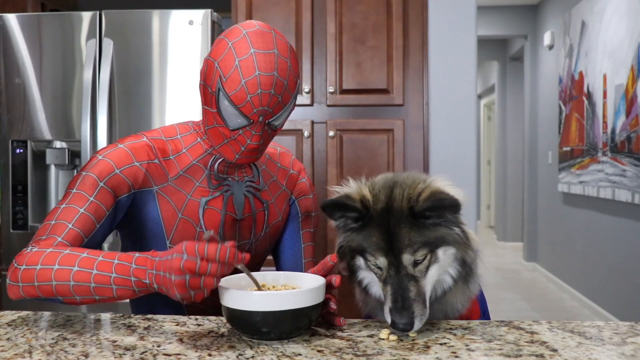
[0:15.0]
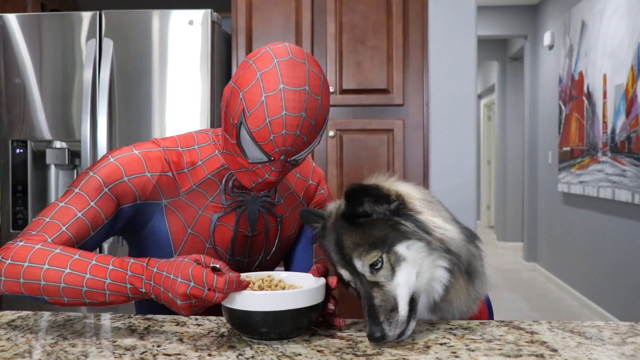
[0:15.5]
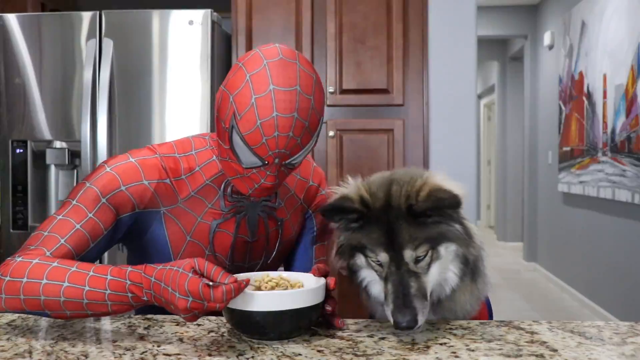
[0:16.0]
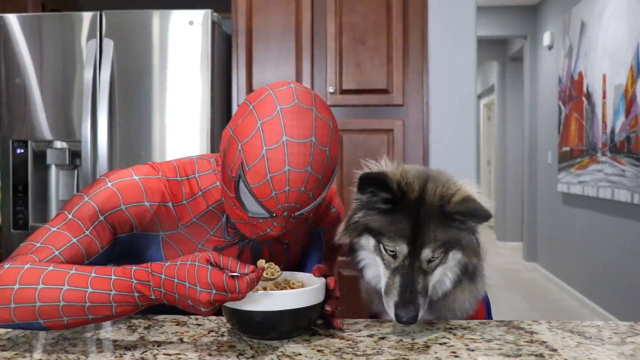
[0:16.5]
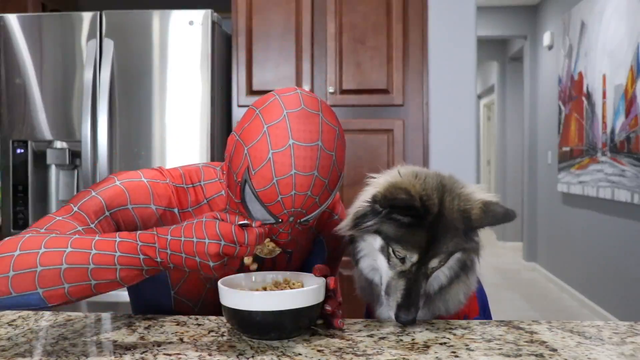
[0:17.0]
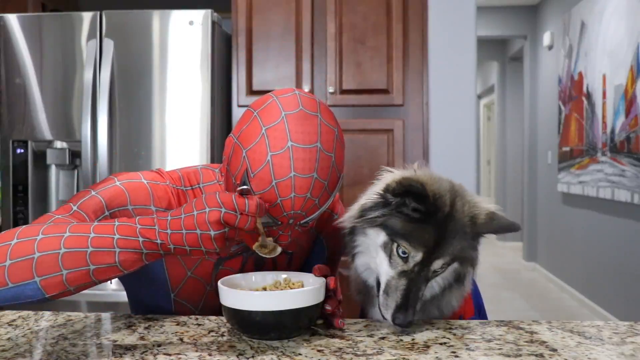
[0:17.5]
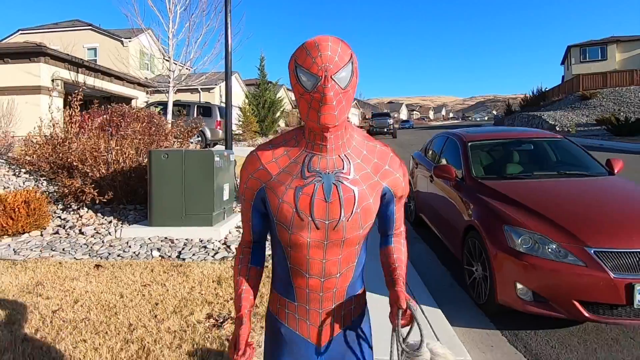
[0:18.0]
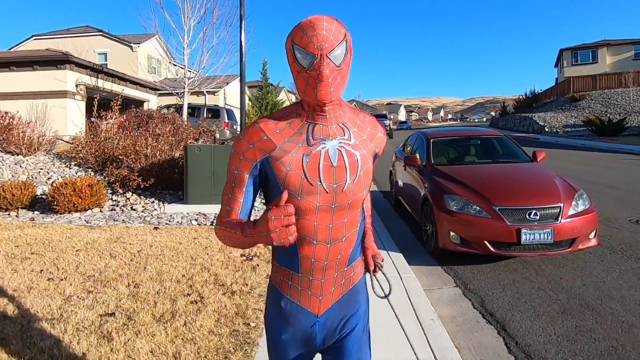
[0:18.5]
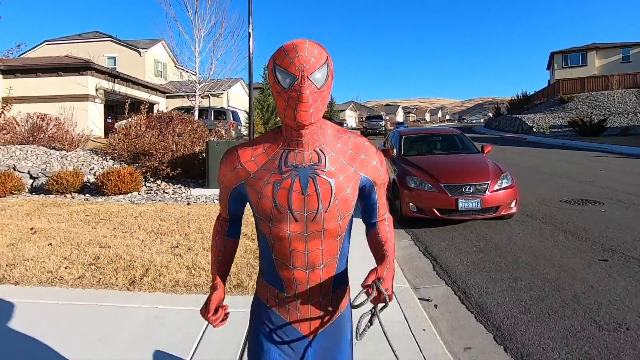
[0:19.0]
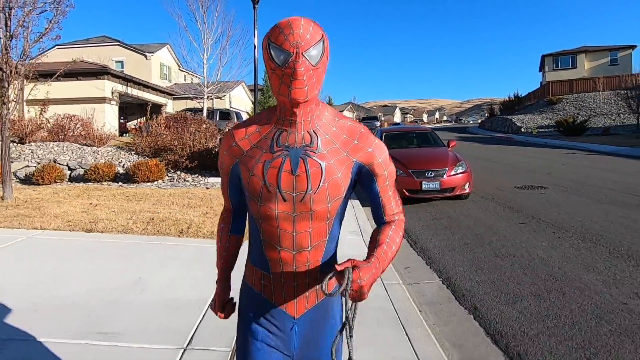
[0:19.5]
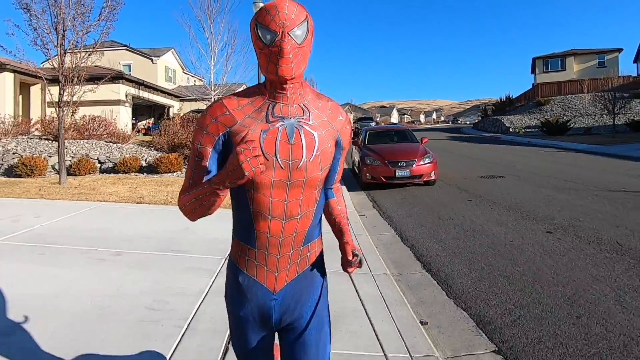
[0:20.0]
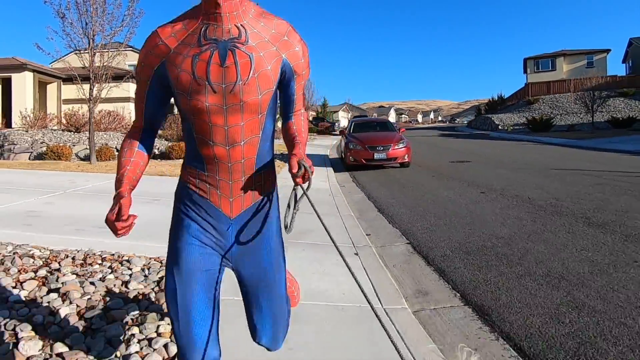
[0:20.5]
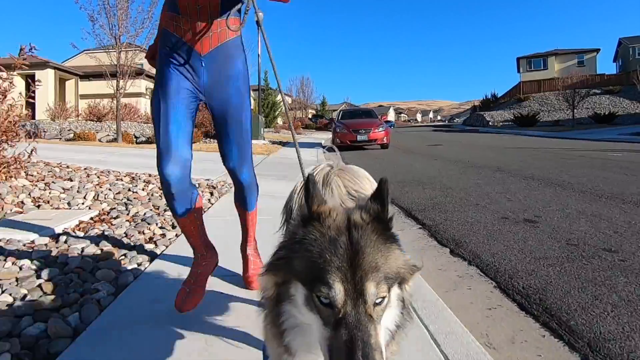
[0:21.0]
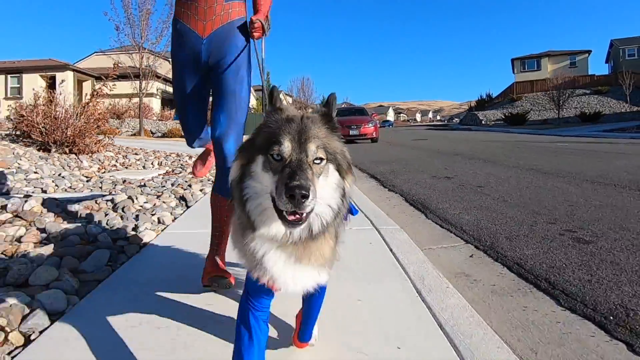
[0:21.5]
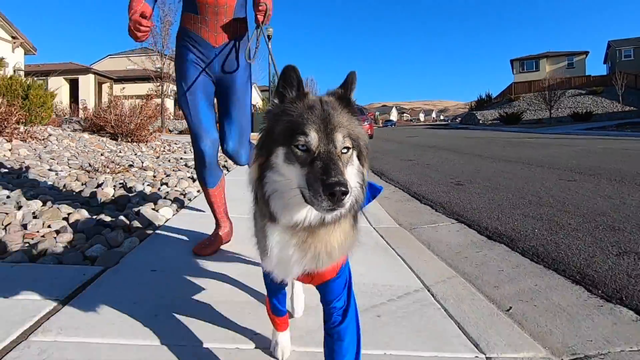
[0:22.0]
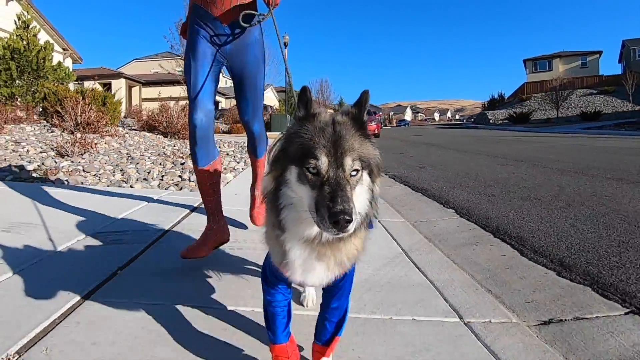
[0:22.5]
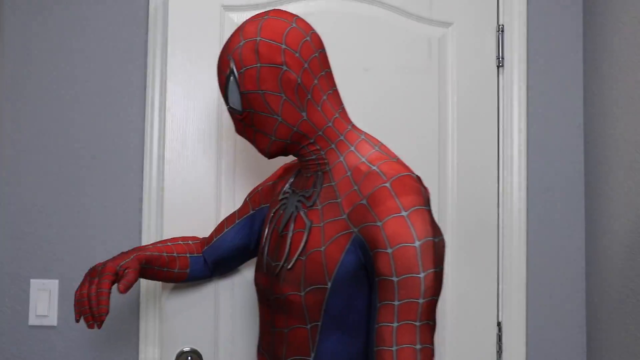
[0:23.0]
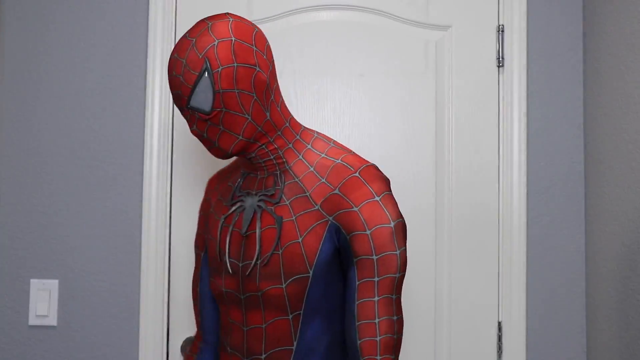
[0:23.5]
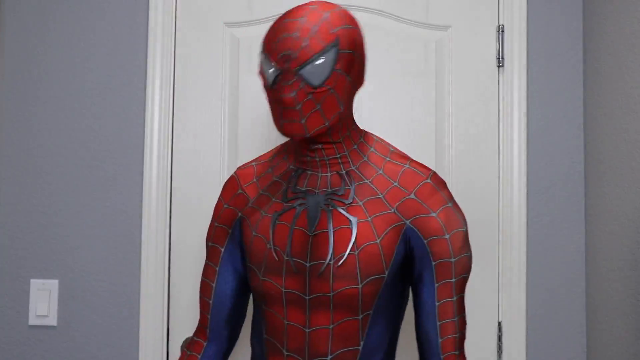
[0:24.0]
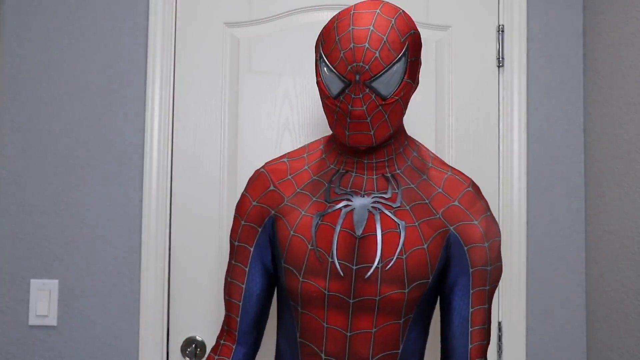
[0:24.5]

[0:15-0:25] The title "the life of spider dog" appears in the upper right-hand corner. Spider-Man, in a full Spider-Man outfit, and the dog, also in a Spider-Man costume, are sitting at a kitchen counter that looks like marble in different shades of tan and black, with a painting in the background. Spider-Man appears to be eating cereal and also gives the dog some cereal. Next, the two are outside jogging down a street in a residential neighborhood, the dog on a leash and still in its Spider-Man costume, with blue on its legs and red cuffs. The view pans over to a backyard in a residential area, where he is holding a ball in his hand. They also walk inside a house and close the door.